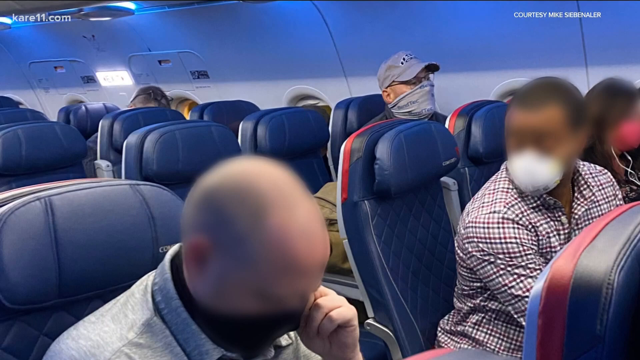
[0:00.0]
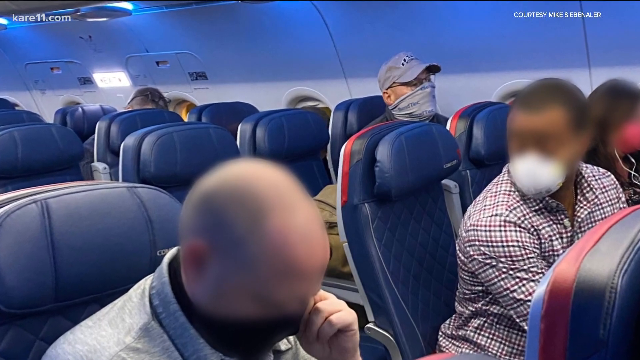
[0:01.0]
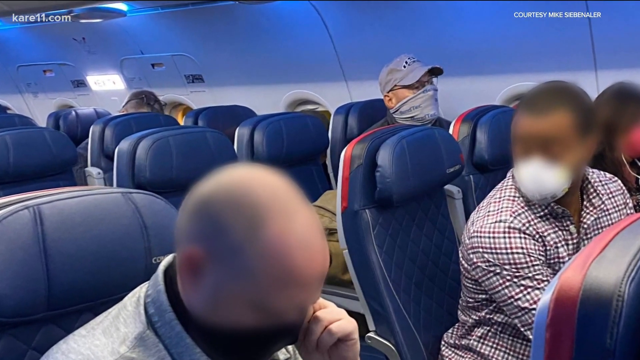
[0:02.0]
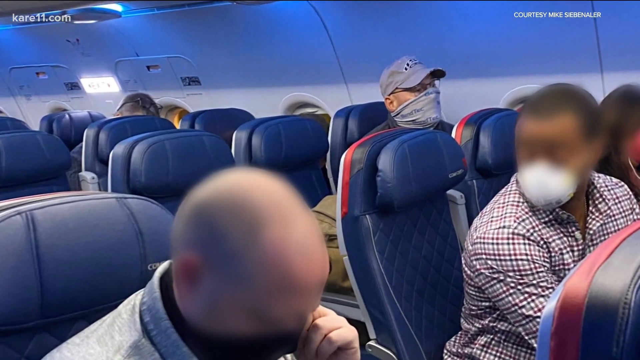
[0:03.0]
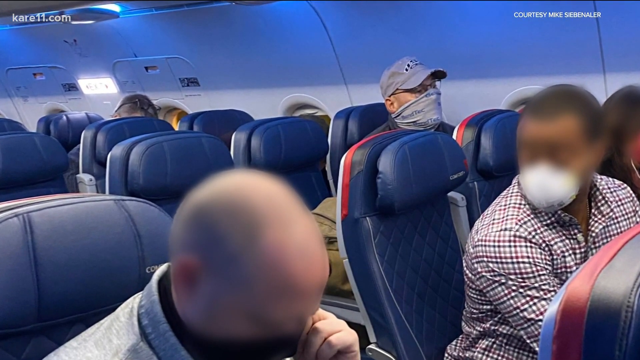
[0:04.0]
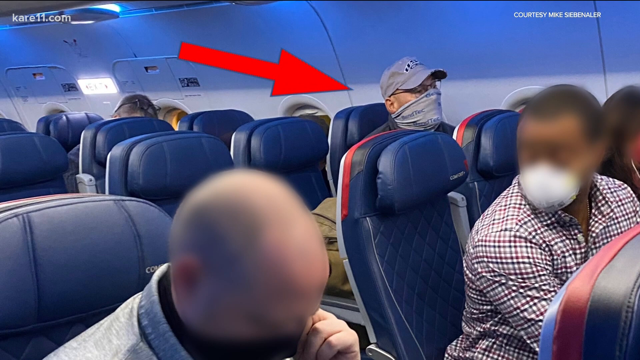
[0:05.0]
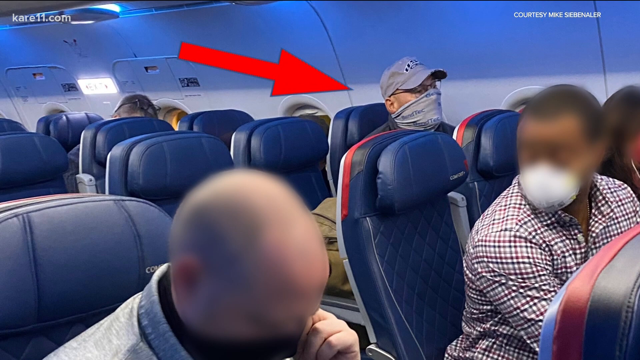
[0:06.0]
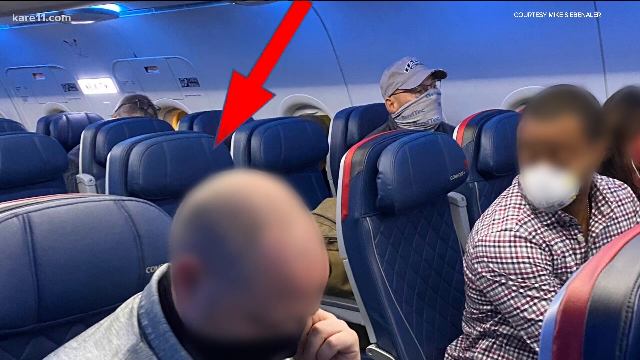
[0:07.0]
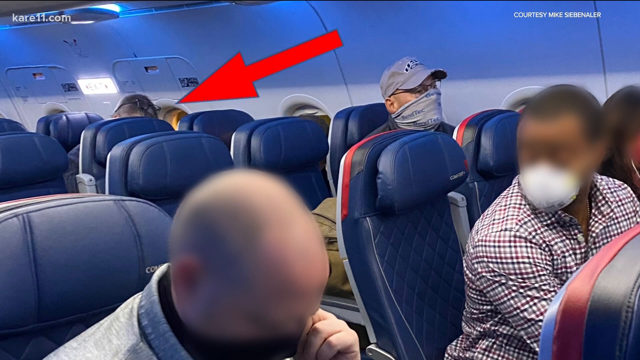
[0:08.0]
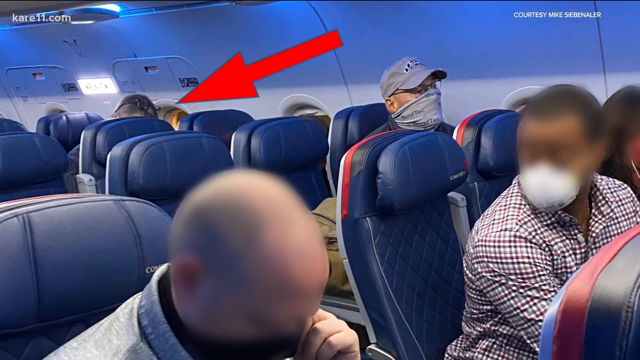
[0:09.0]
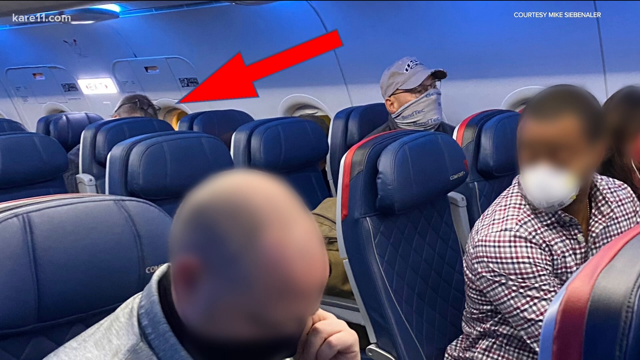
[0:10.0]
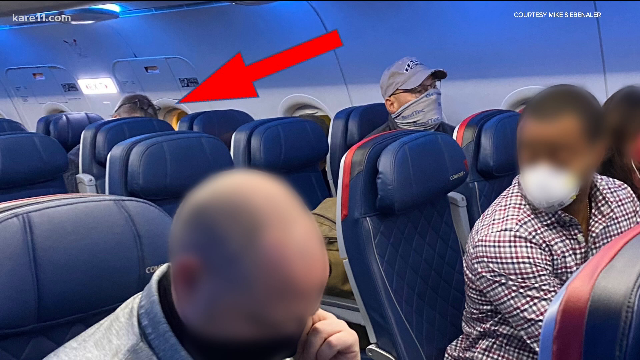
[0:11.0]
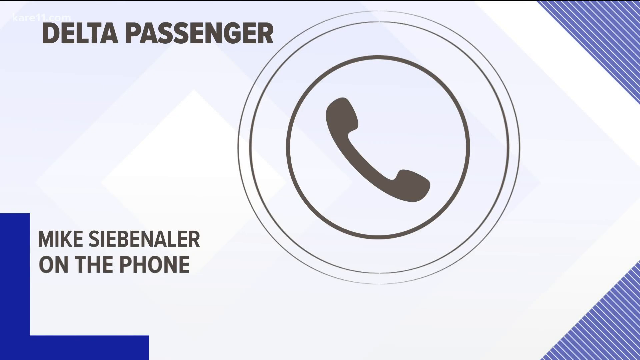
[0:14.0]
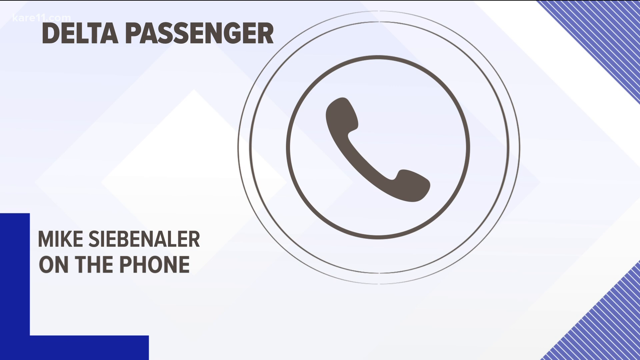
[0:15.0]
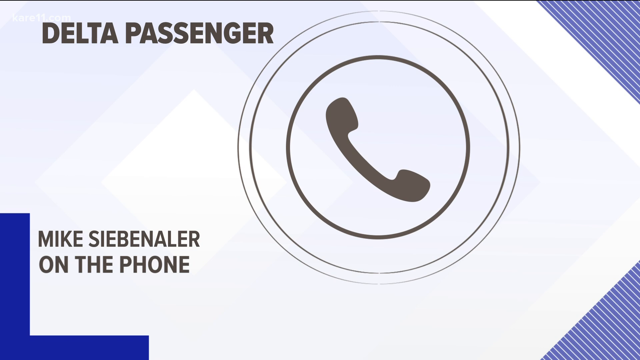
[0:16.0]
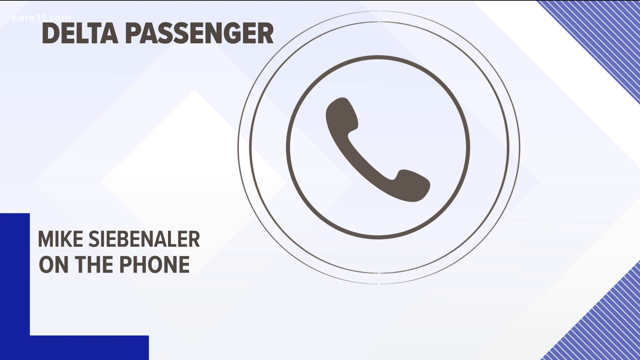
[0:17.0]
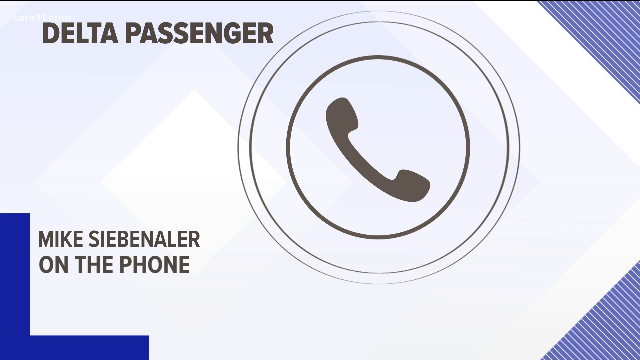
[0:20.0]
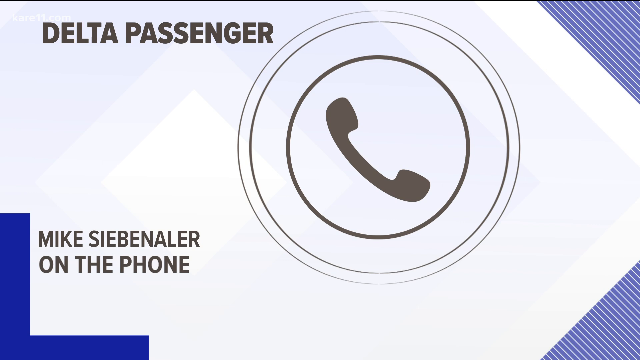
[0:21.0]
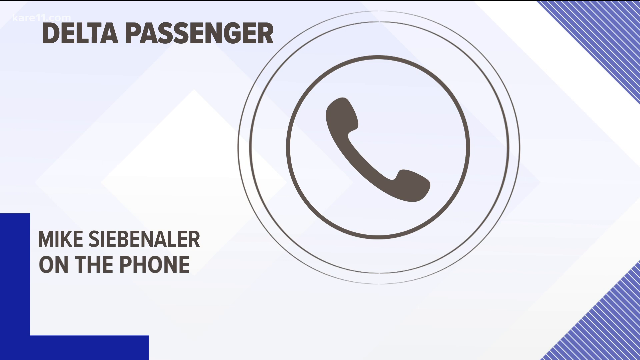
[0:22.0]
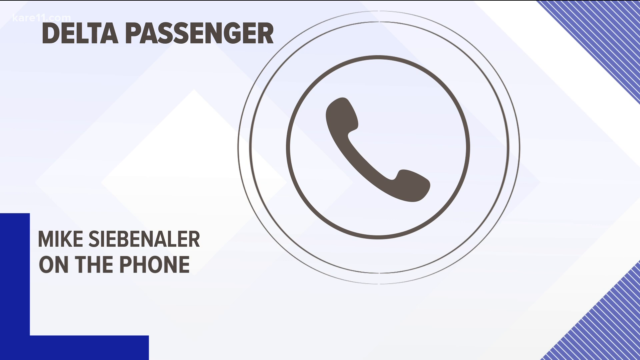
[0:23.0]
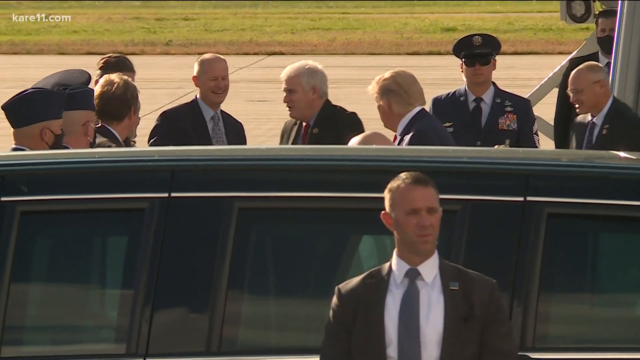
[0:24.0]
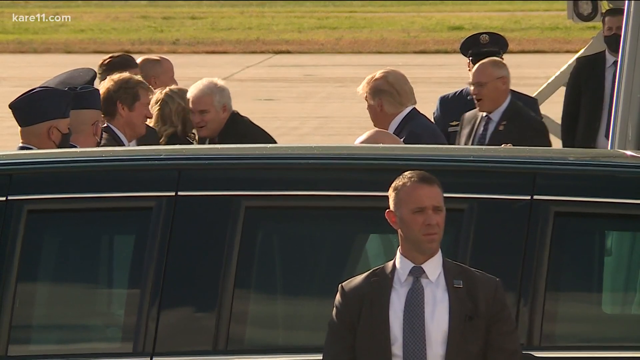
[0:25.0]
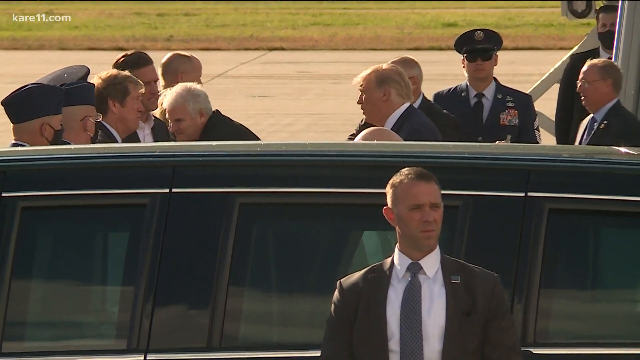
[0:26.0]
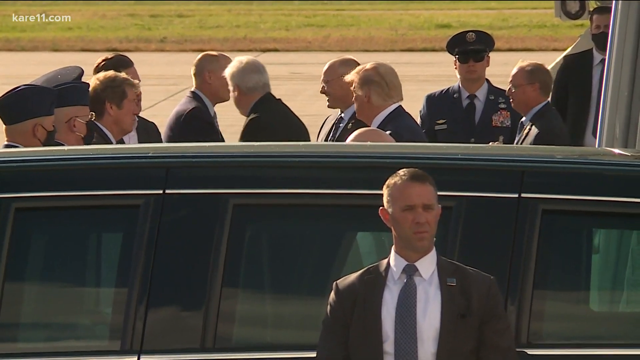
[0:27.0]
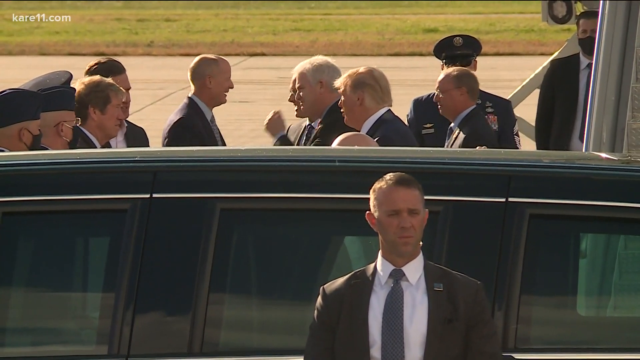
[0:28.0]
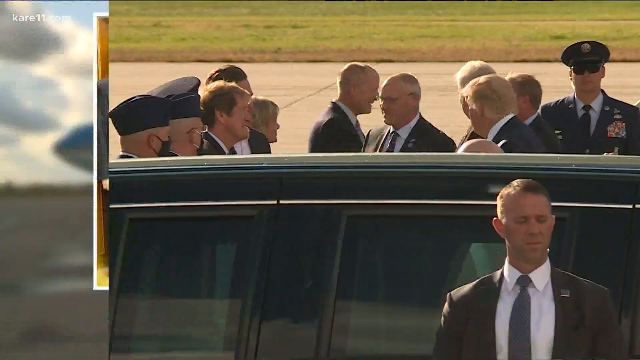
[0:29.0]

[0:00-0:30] The scene appears to be the inside of an airplane. Many faces are covered with what appear to be masks, and a red arrow on the top left side points toward a couple of them. The URL "kare11.com" is shown, and on the top right side is "courtesy of Mike Sebenaler". Next comes a "Delta Passenger" caption with a phone depicted graphically against what appear to be rectangular, diagonally shaped shapes in the background, with "Mike Sebenaler on the phone" in the bottom left. The video then moves to an image of the current United States president in front of a limo, departing from a plane and surrounded by military personnel, with a person possibly from the Secret Service prominently shown. The gathering looks very official, and a general or a high-ranking military official is at the back. It then transitions to a picture of some individuals standing and smiling at the camera.